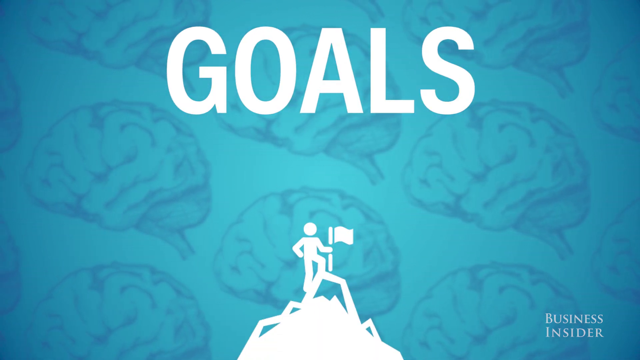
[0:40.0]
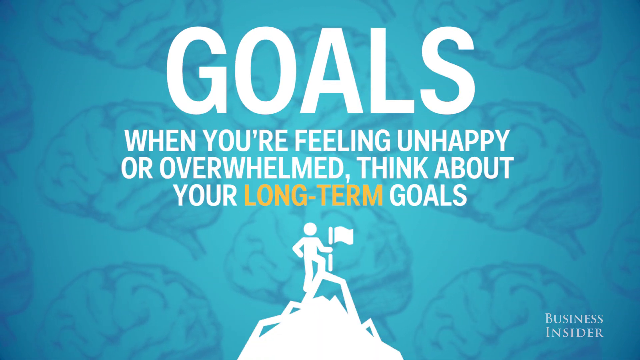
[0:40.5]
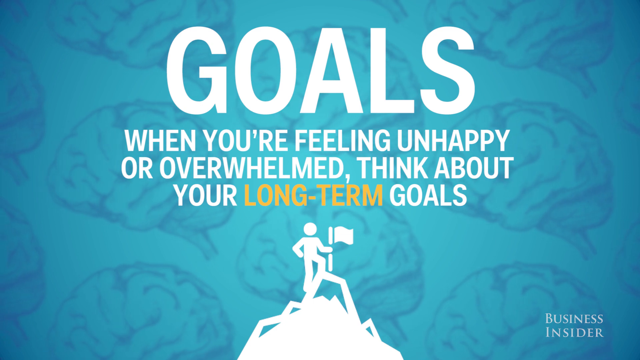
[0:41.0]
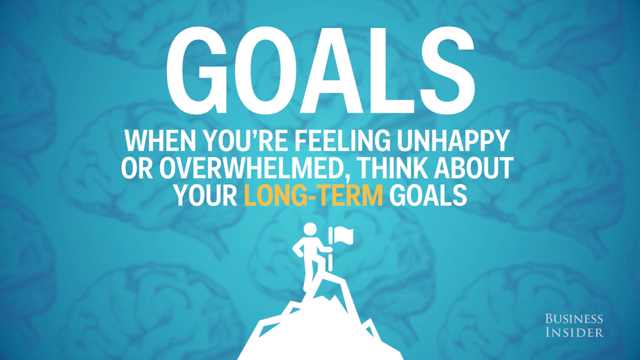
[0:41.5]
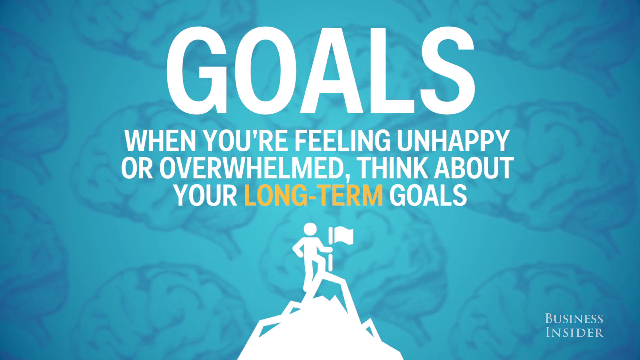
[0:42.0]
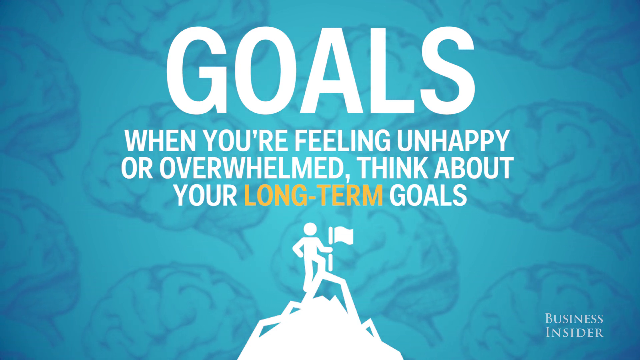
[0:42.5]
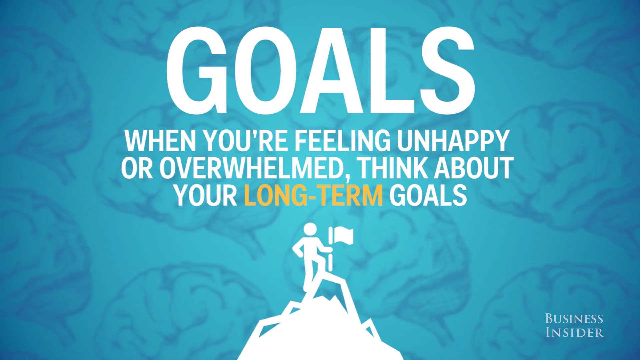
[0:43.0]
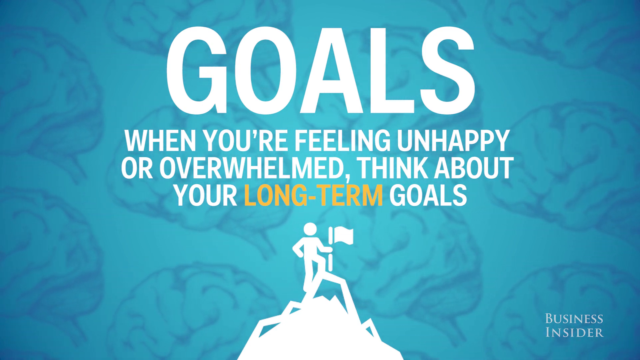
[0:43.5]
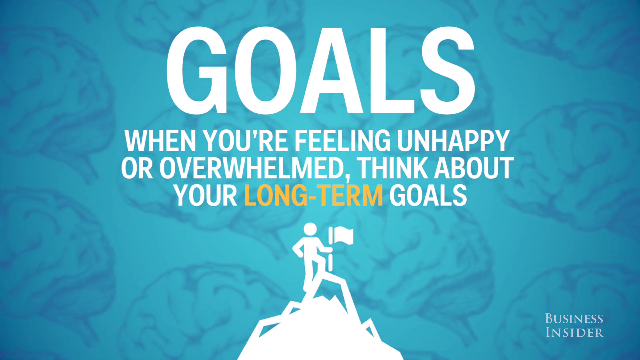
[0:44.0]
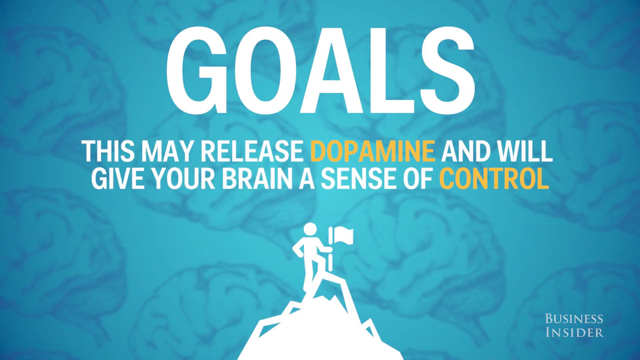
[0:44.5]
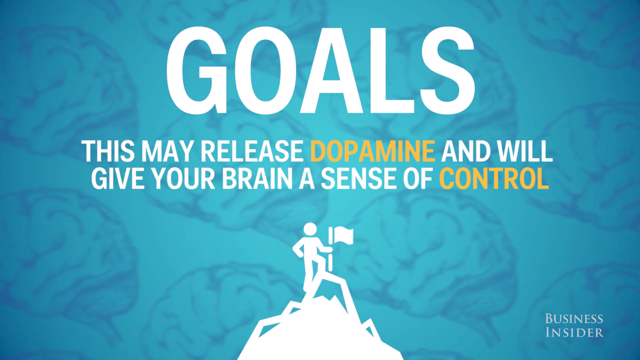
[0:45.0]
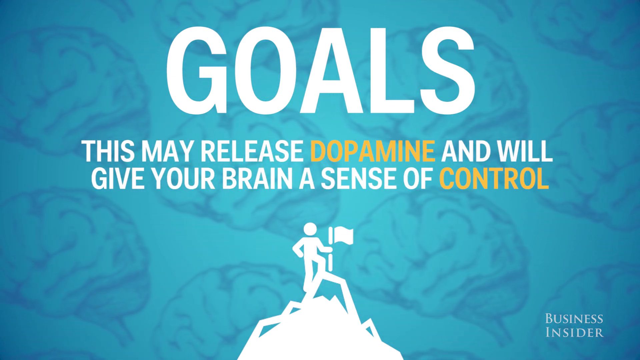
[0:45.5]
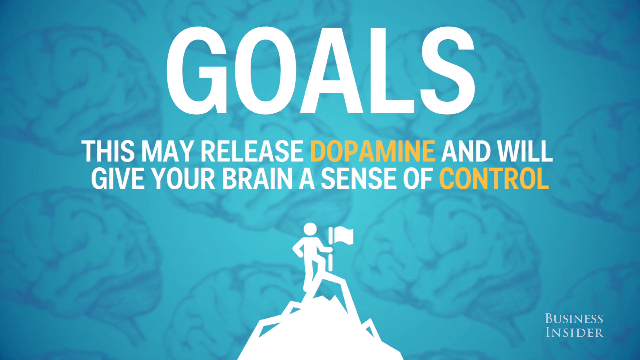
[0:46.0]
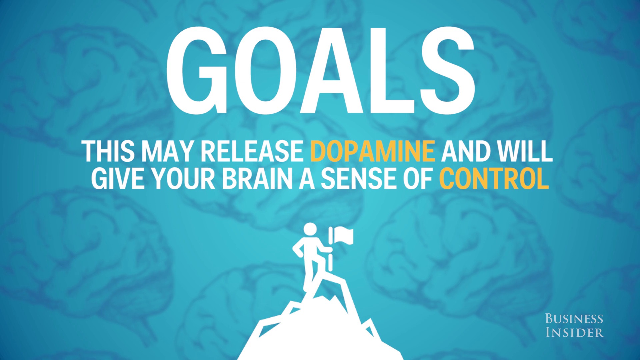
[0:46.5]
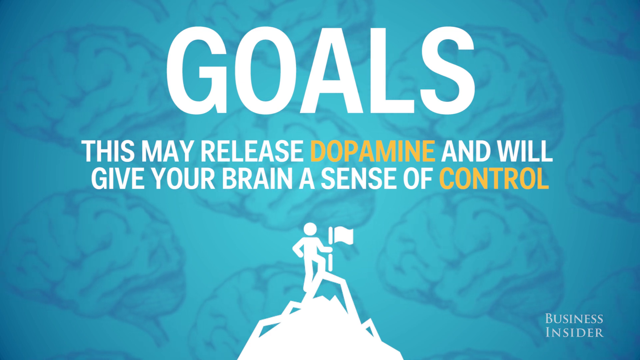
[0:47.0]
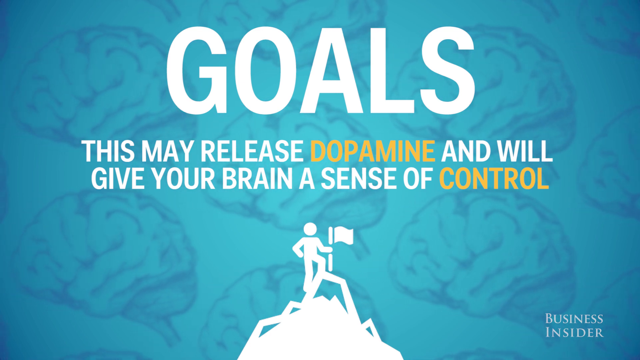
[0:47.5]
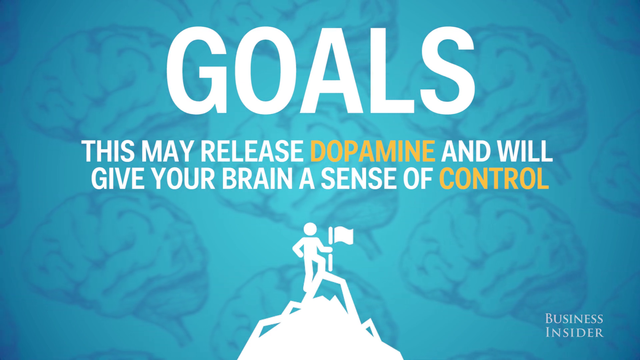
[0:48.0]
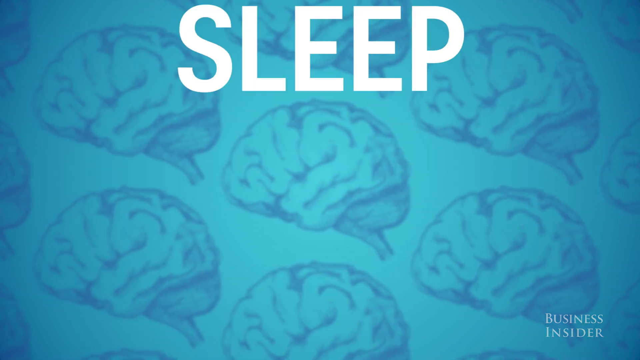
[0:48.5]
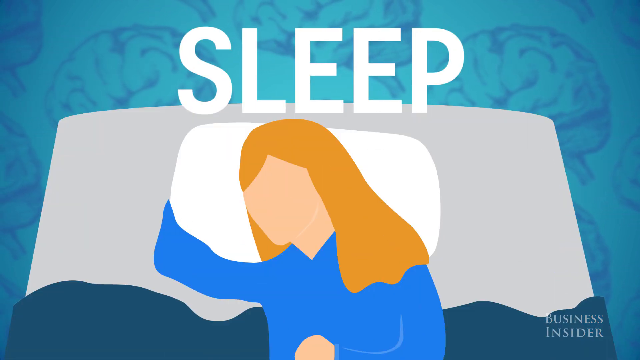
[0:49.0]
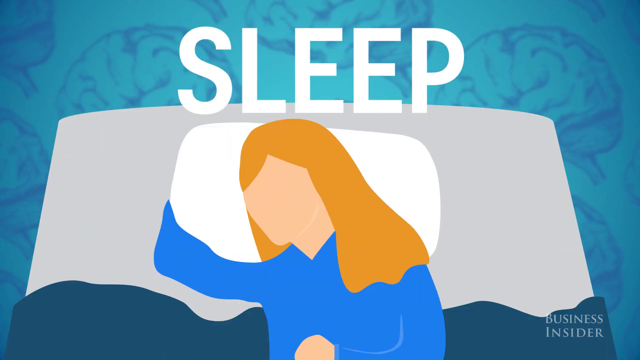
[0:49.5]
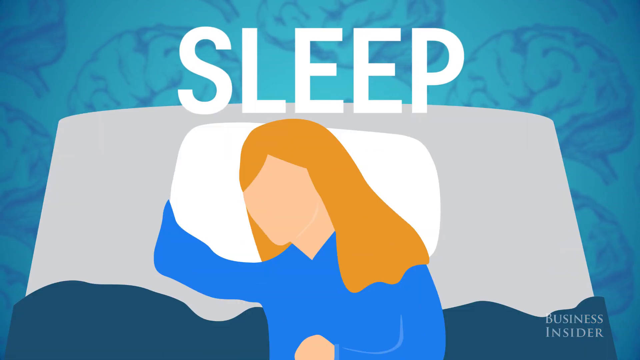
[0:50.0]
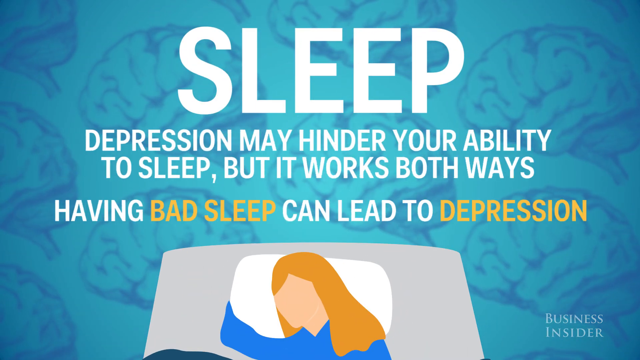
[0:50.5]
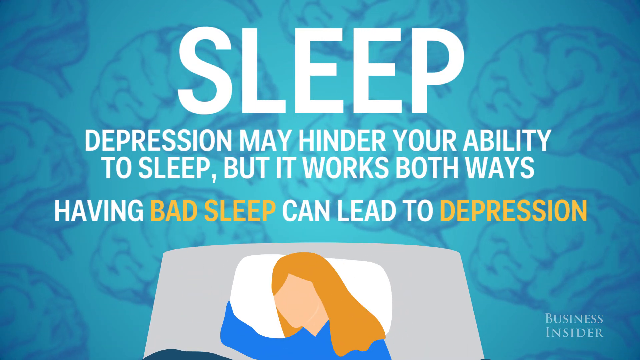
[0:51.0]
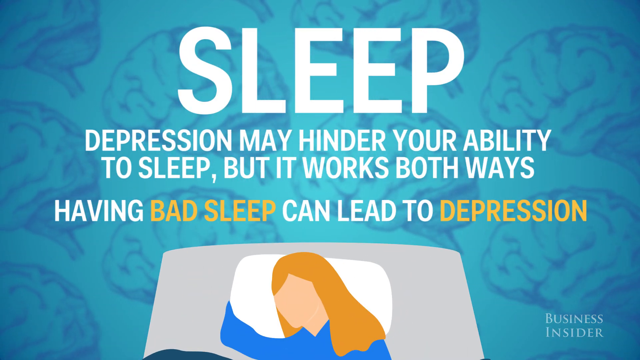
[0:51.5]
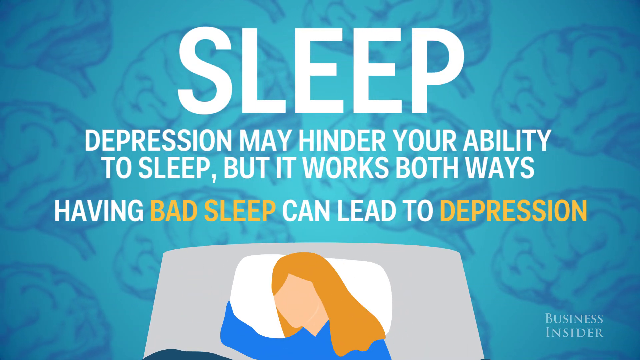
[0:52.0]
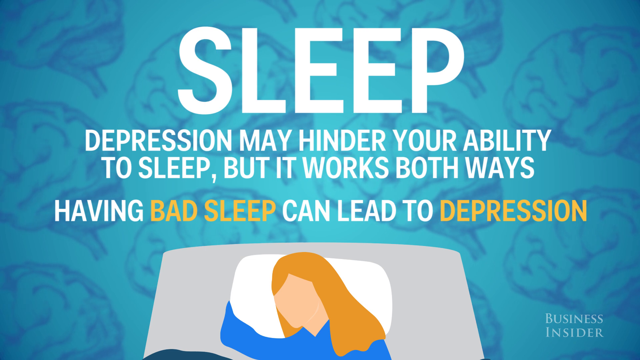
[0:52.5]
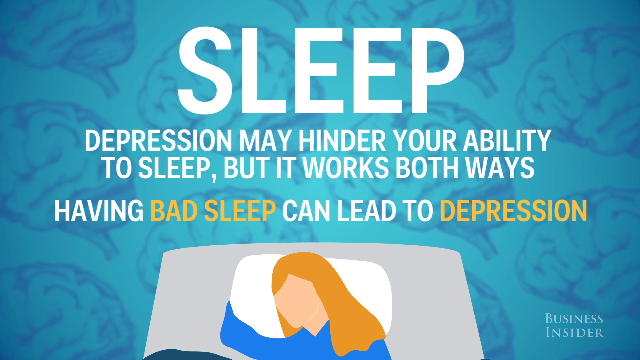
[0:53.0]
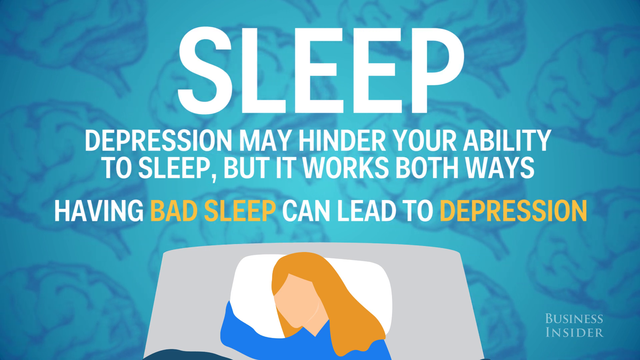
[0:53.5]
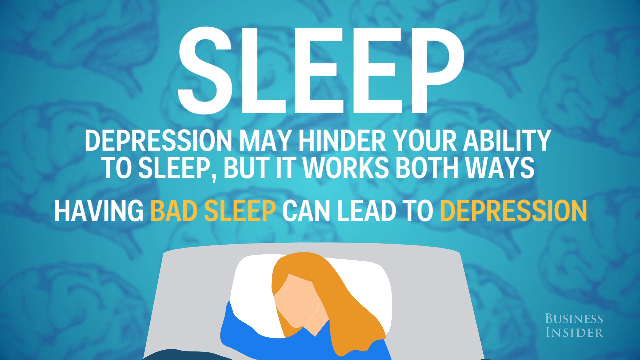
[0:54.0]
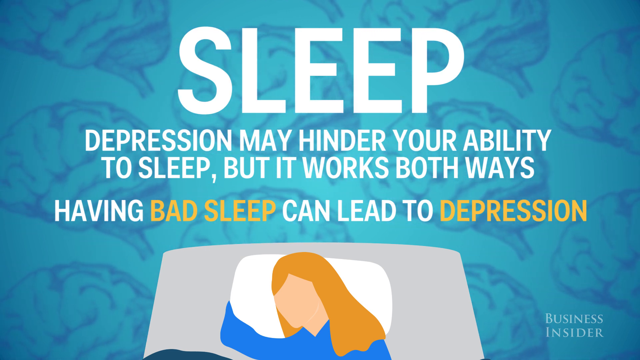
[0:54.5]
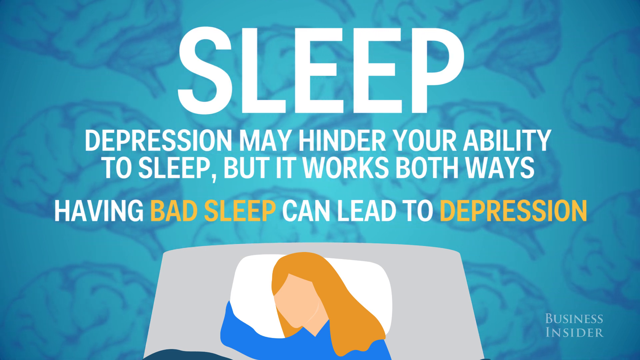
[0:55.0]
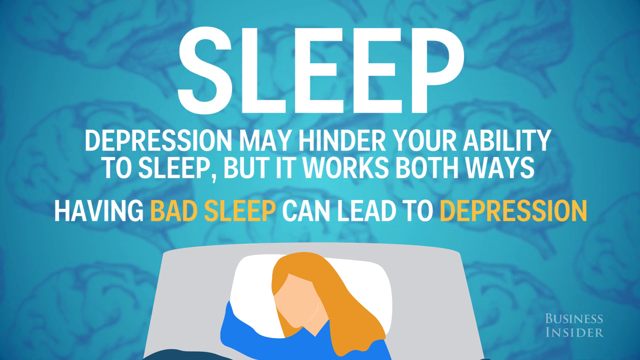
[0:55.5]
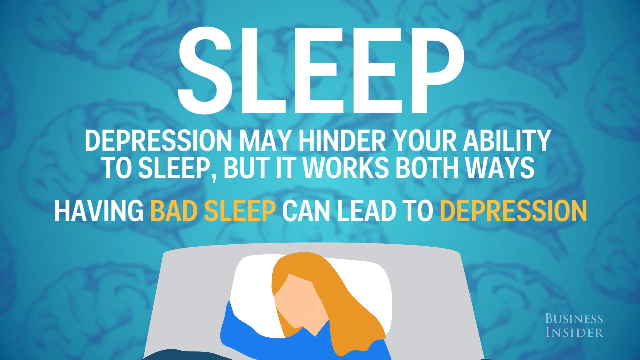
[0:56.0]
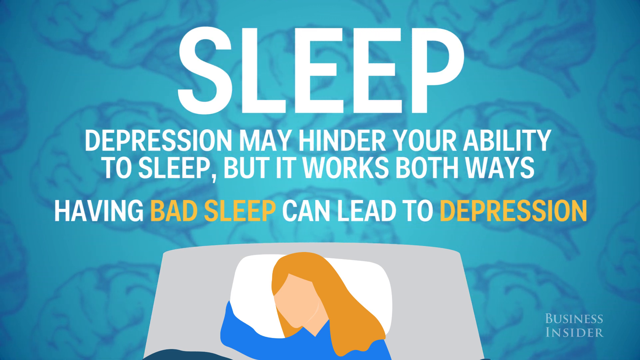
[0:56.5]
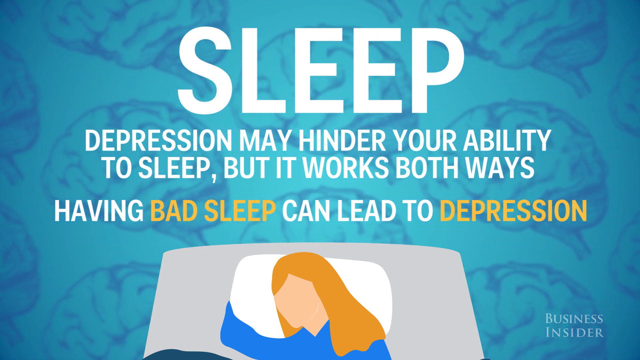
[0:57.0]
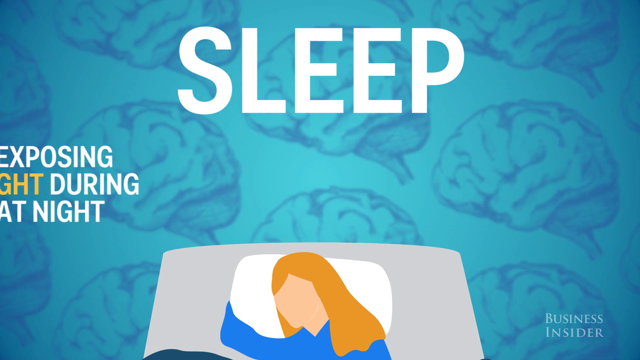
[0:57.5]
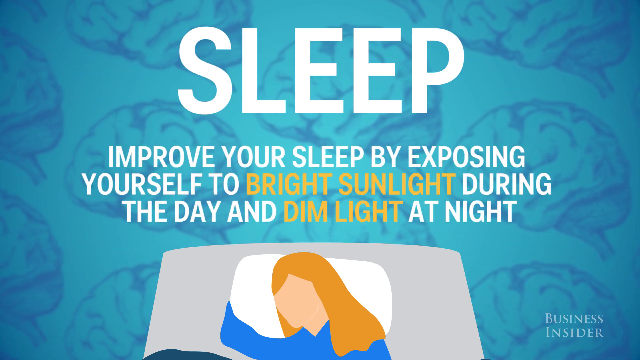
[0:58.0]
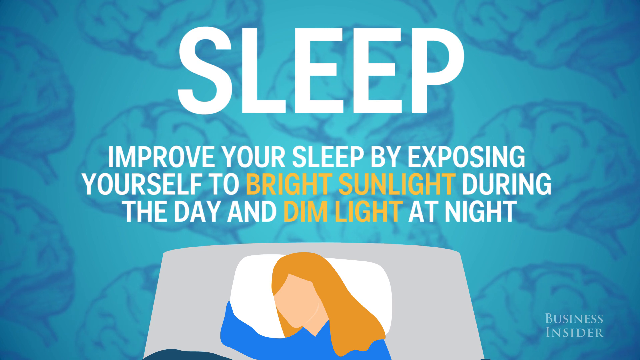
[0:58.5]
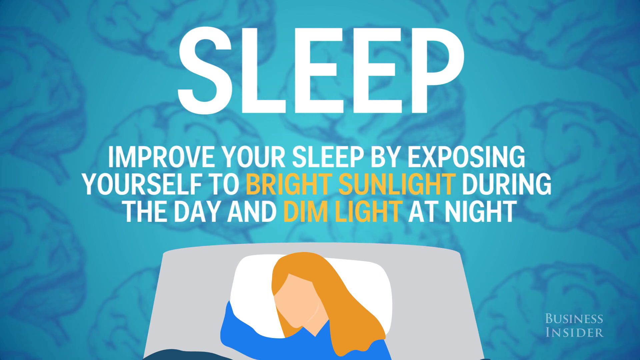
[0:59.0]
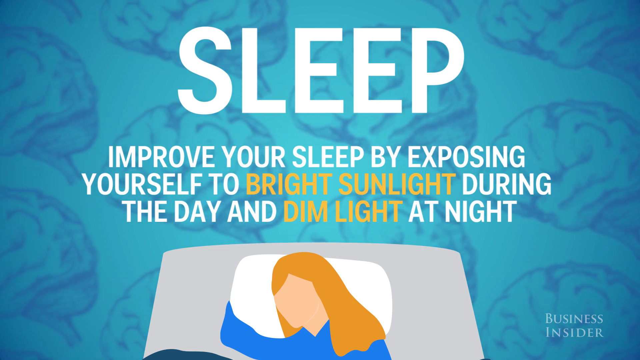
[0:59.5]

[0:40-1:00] The word "GOALS" is in white capital letters over the blue background of brains, with text below reading "when you're feeling unhappy or overwhelmed, think about your long term goals"; "long term" is in yellow. A drawing of an unrealistic-looking person, all in white, puts a flag at the peak of a mountain, holding the flag in their right hand. New text appears above the same drawing: "this may release dopamine and will give your brain a sense of control", with "dopamine" and "control" in yellow. The word "sleep" then appears in white capital letters, and below it is a large drawing of a woman with no facial features (no eyes, nose or mouth), just a white, peachy-colored face. She has medium-length golden brown and blonde hair and wears a blue shirt, turned slightly on her side over a white pillow; the bed is gray and the covers are a darker blue. Text reads "depression may hinder your ability to sleep but it works both ways. Having bad sleep can lead to depression.", with "bad sleep" and "depression" in yellow, followed by "Improve your sleep by exposing yourself to".